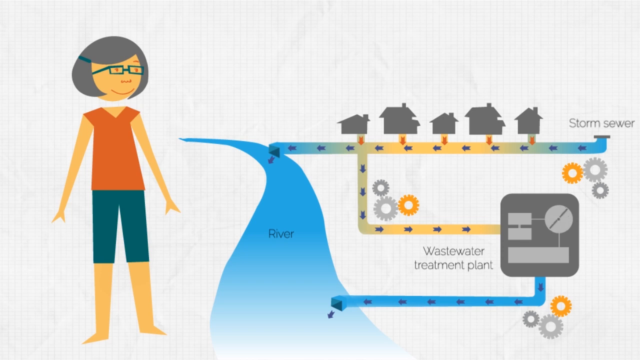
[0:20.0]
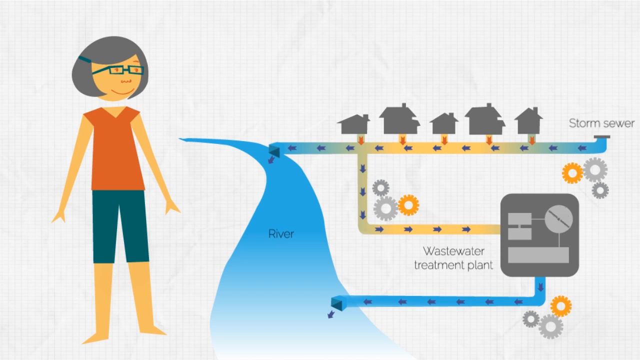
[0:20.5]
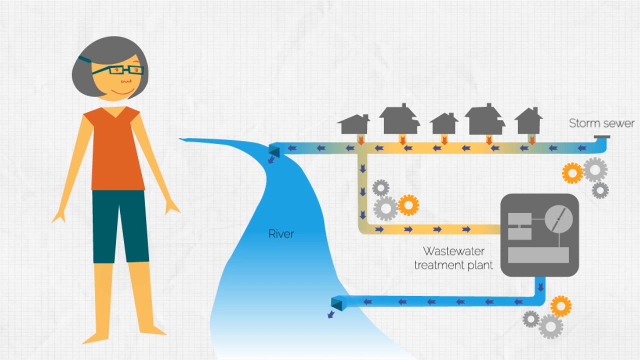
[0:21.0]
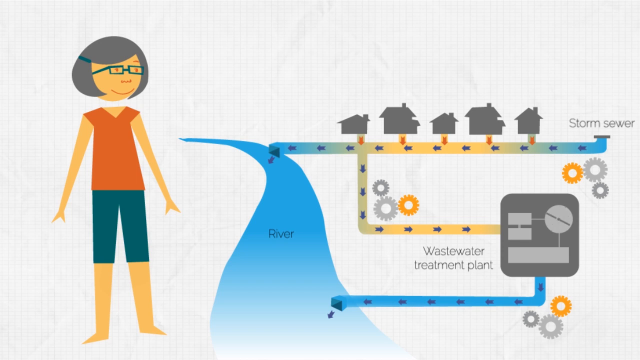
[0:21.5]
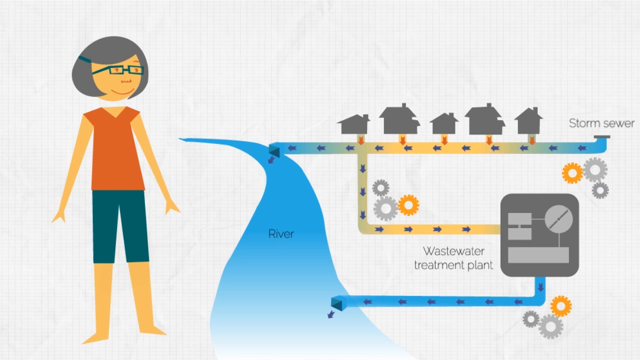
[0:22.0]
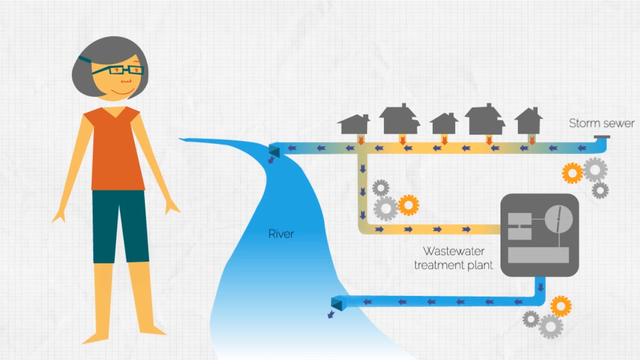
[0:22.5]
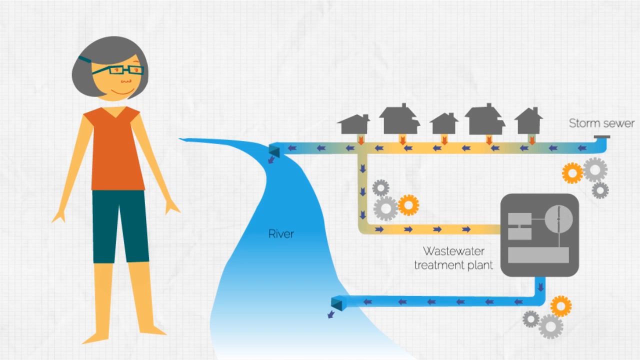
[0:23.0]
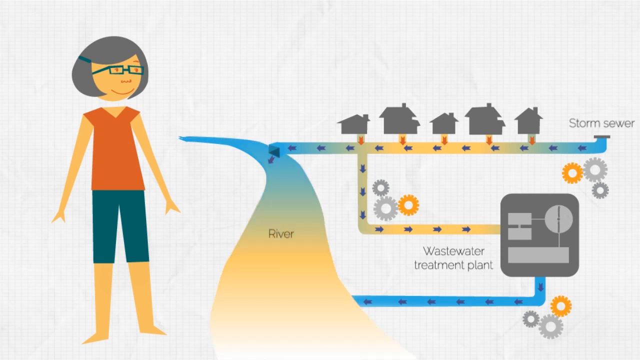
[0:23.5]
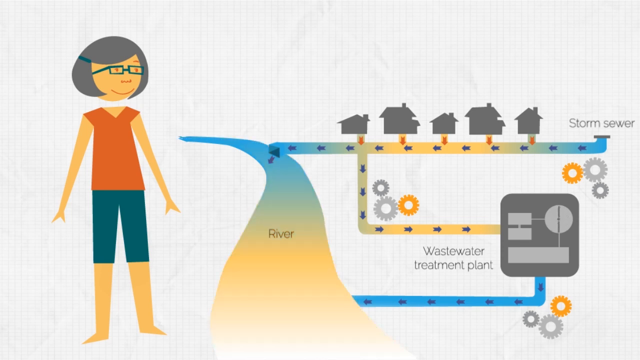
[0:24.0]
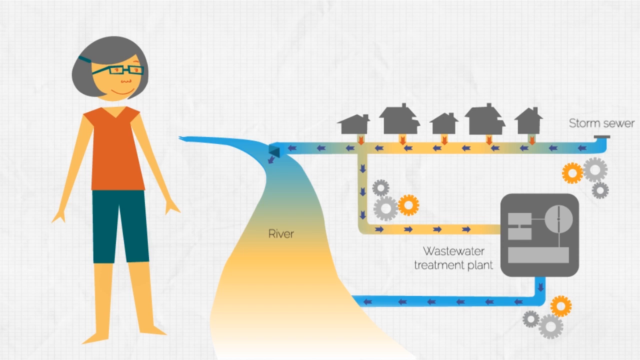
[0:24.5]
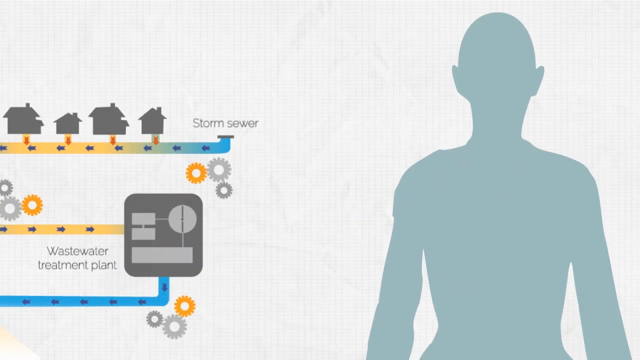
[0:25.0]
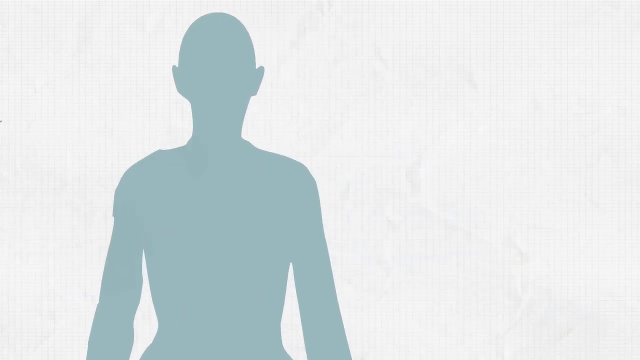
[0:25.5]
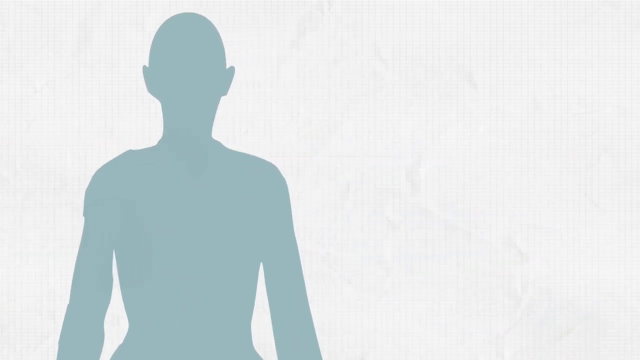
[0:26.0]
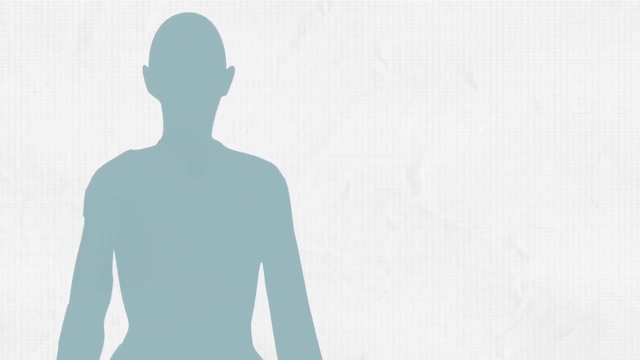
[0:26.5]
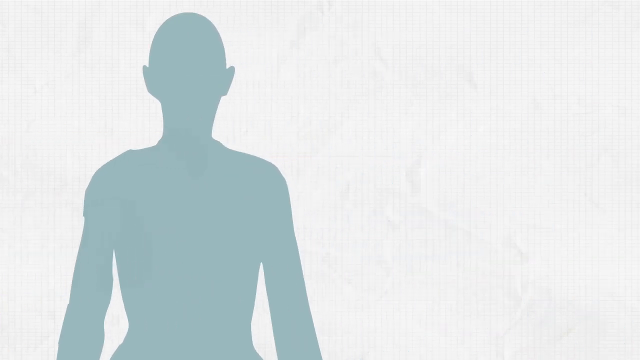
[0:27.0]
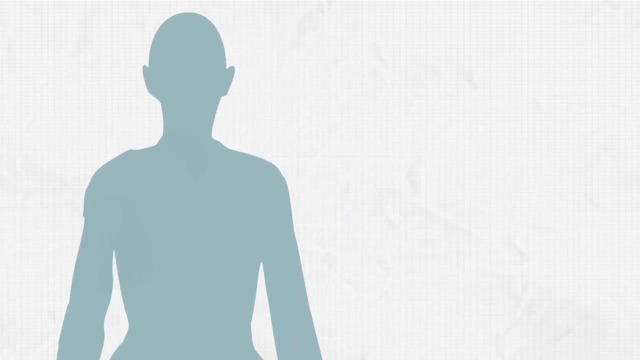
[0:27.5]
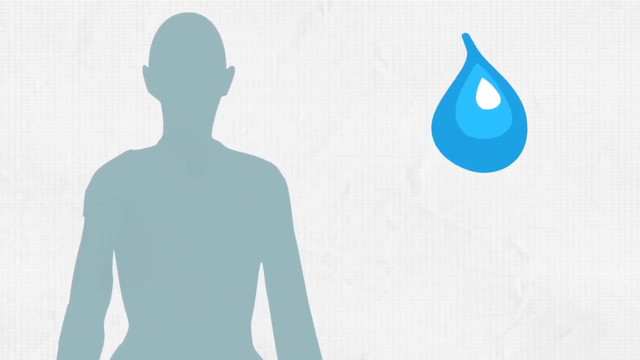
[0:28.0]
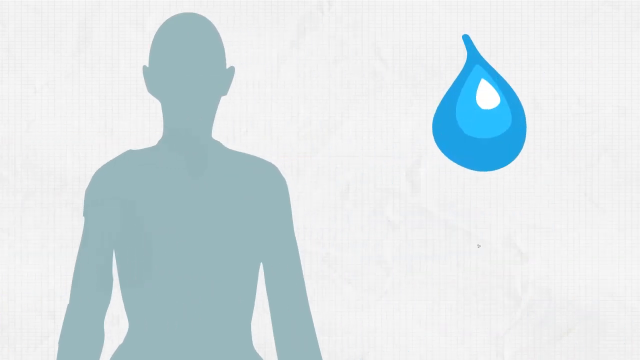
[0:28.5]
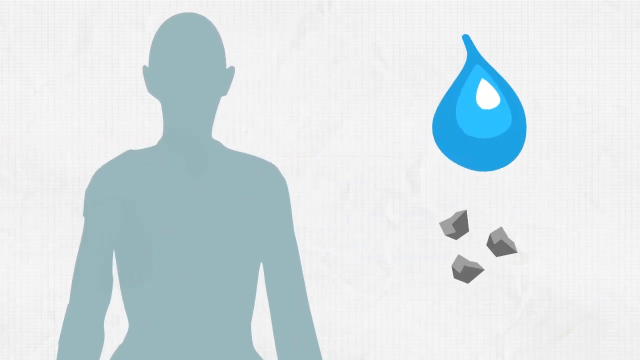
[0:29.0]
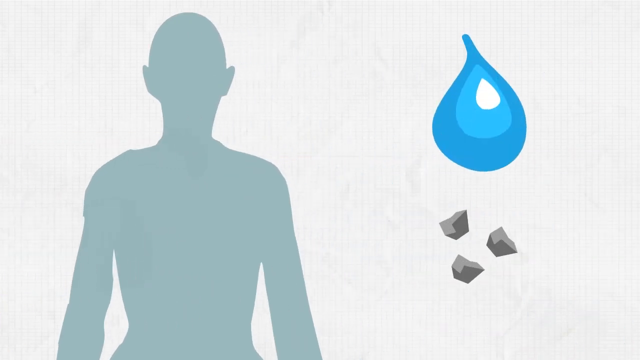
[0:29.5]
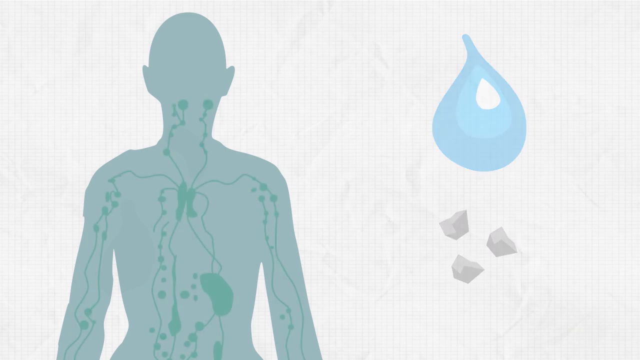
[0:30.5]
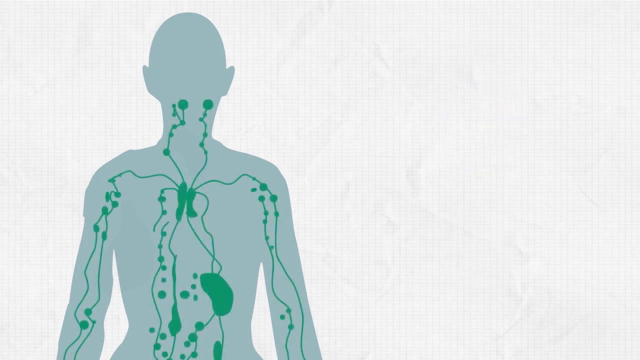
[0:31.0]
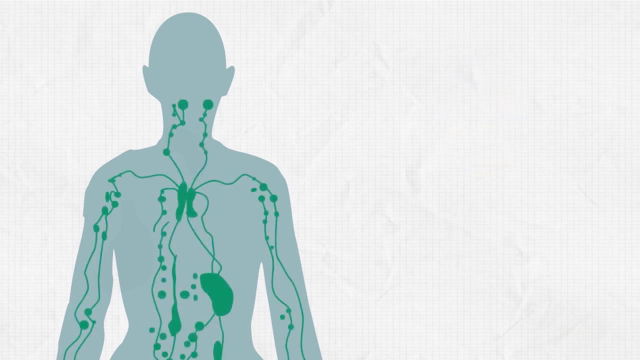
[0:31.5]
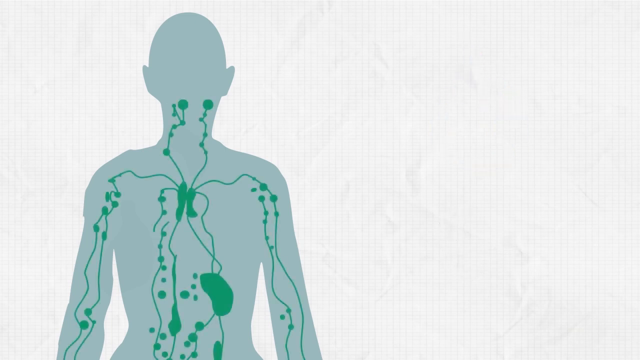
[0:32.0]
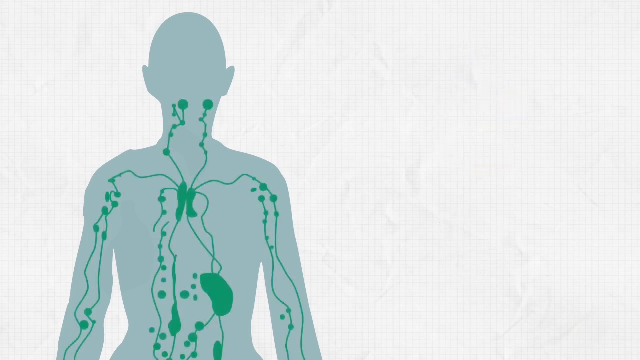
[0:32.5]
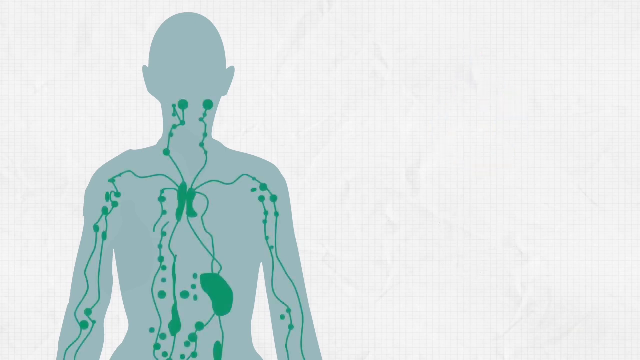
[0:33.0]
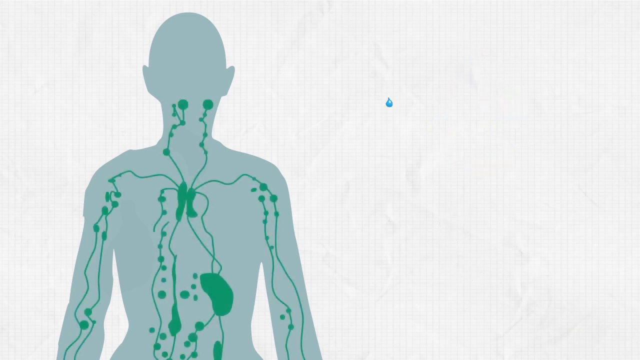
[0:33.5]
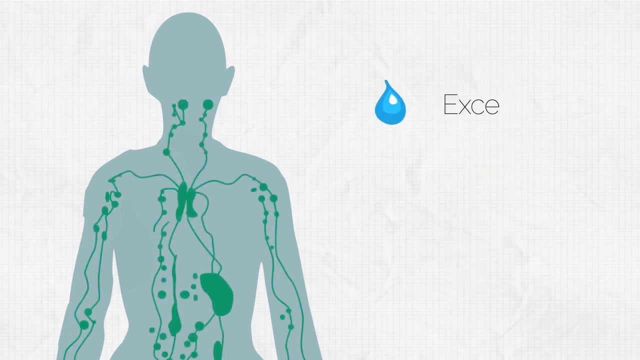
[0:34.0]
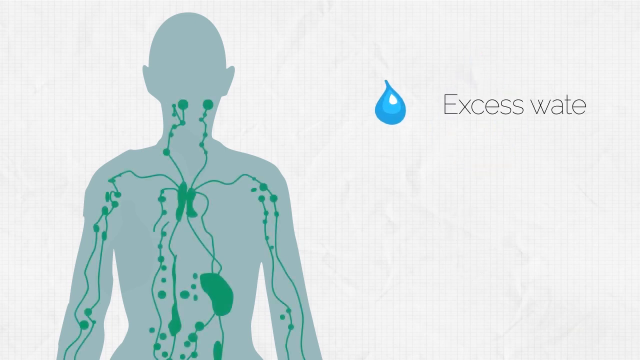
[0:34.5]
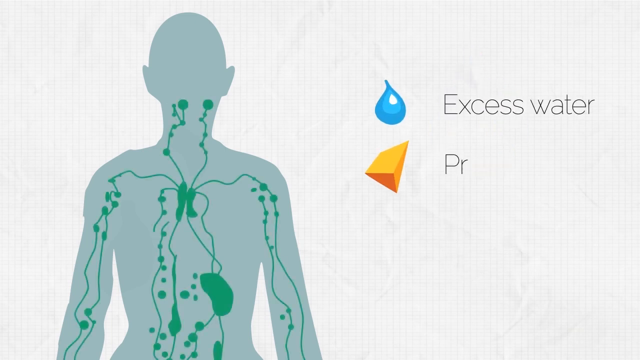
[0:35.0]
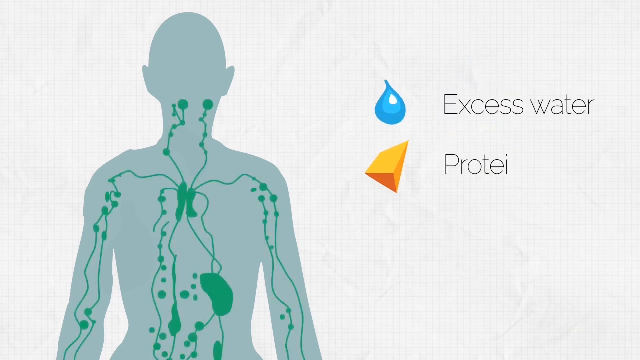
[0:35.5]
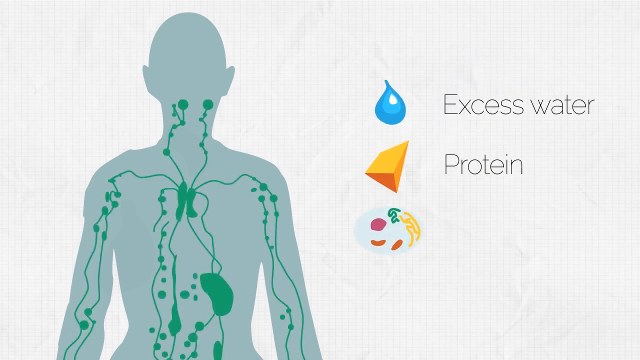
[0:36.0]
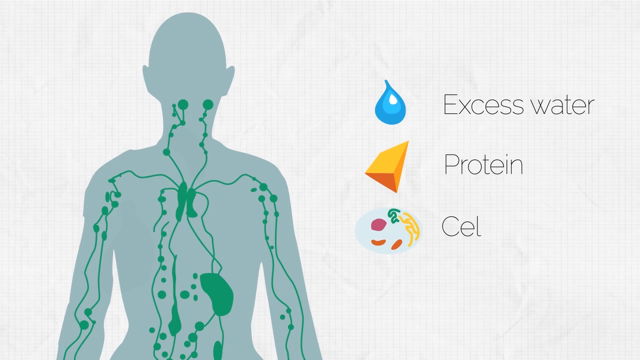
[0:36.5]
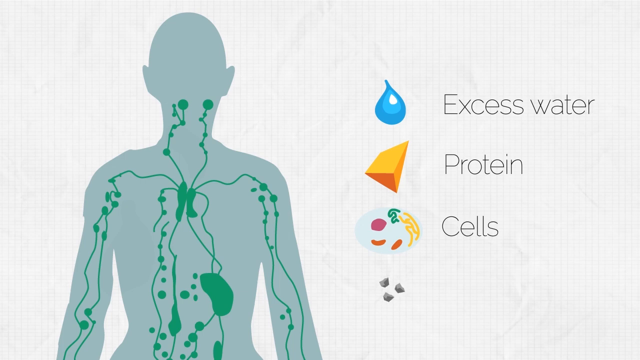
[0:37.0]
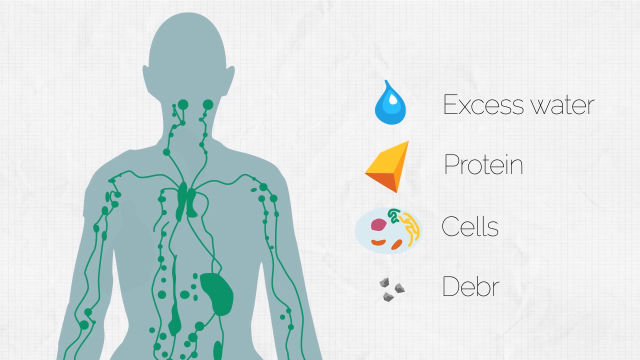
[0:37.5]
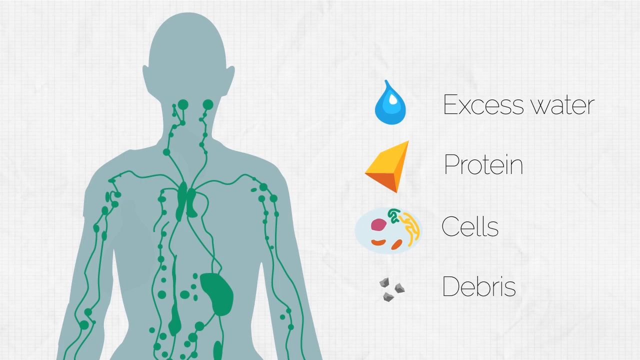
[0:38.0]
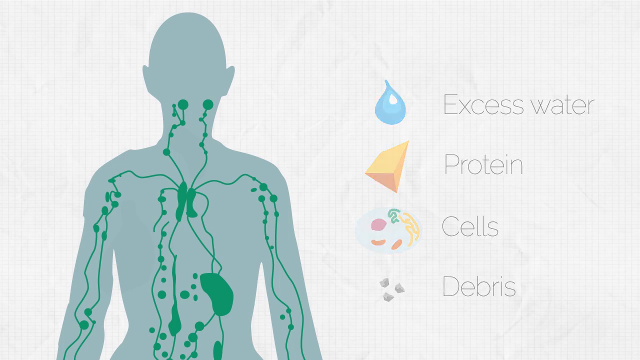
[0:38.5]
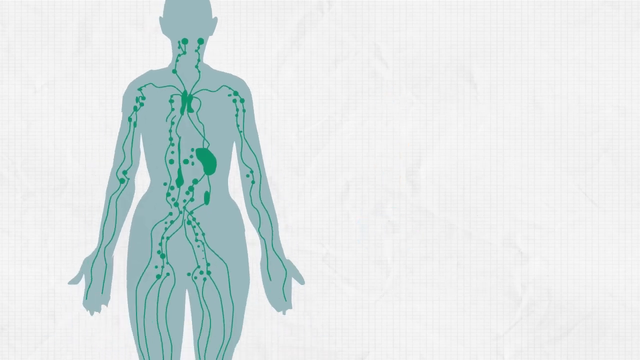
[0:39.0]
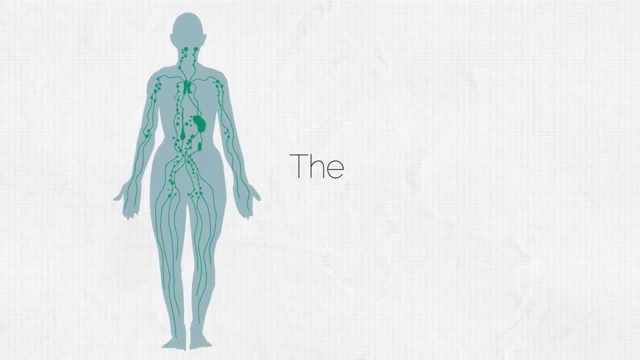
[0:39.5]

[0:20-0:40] The diagram swipes off to the left. A light gray outline silhouette of a man appears on the left, and then green appears inside it, apparently showing parts of different organs, little veins, and tiny dots all over. To the right are four rows: "Excess water" with a large blue raindrop to its left, "Protein" with what looks like a block of cheese, "Cells" with a light blue circle containing little amoeba-looking cells, and "Debris" with three dark gray pieces of what looks like dirt. The text is a very thin black sans serif font with only the first letter capitalized. The words disappear and the view pans out from the torso and head to show the full body of the silhouette, now labeled "the lymphatic system".